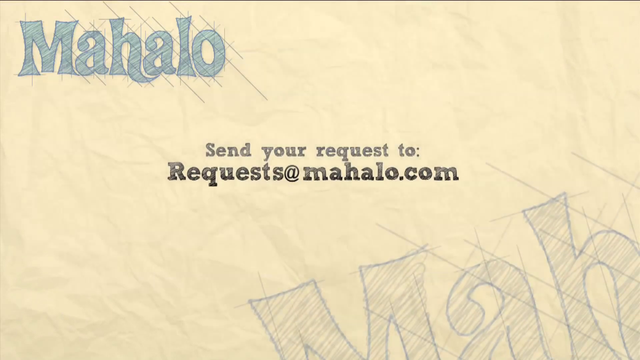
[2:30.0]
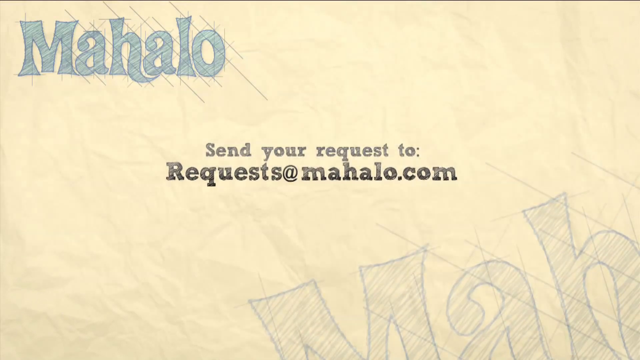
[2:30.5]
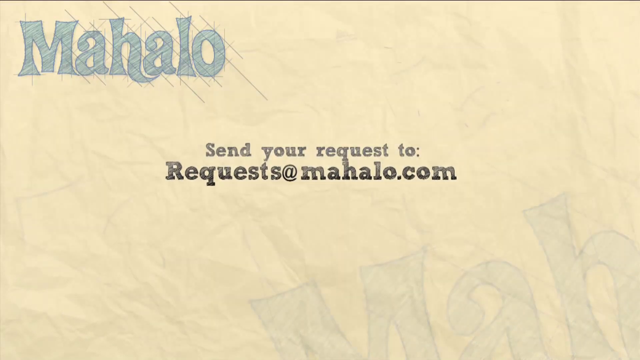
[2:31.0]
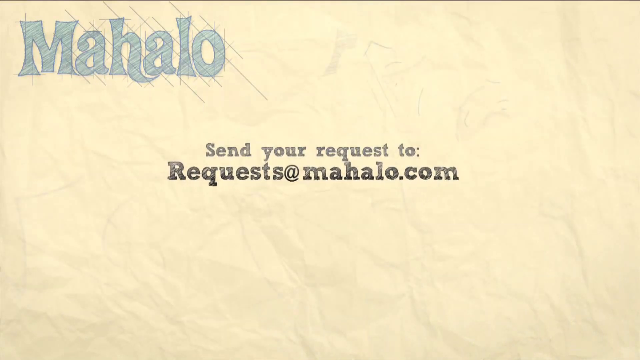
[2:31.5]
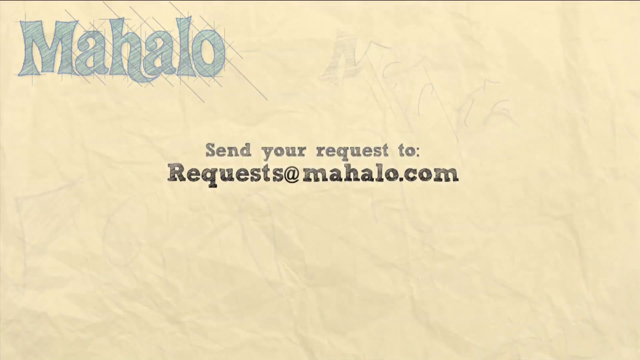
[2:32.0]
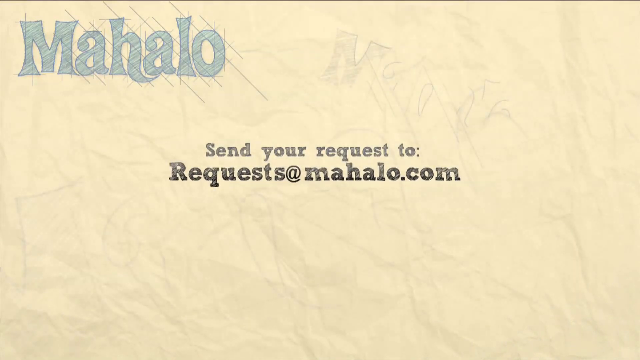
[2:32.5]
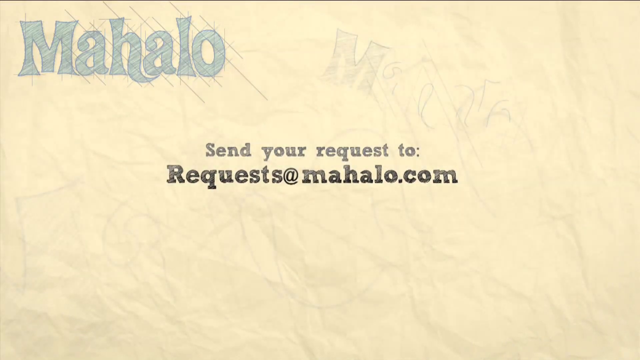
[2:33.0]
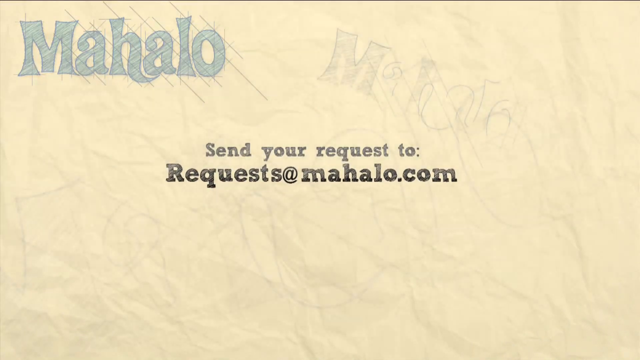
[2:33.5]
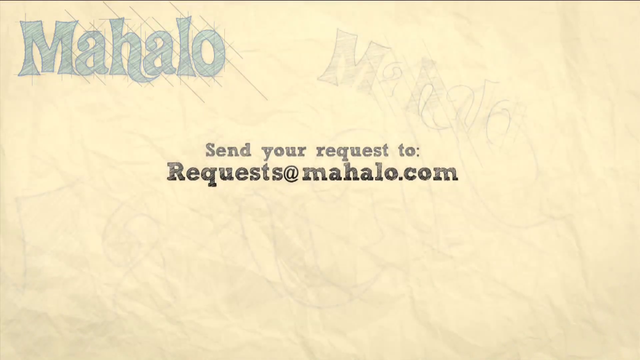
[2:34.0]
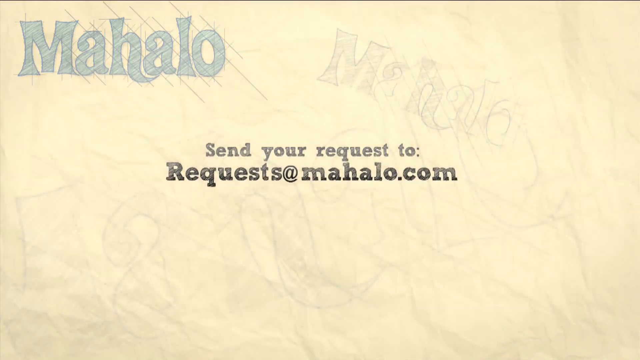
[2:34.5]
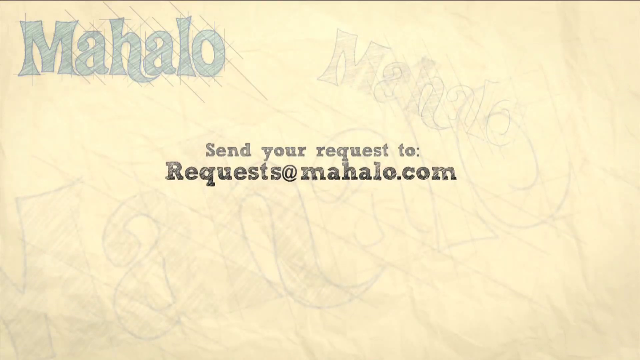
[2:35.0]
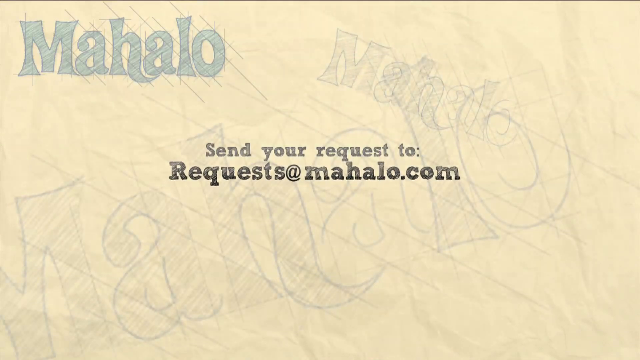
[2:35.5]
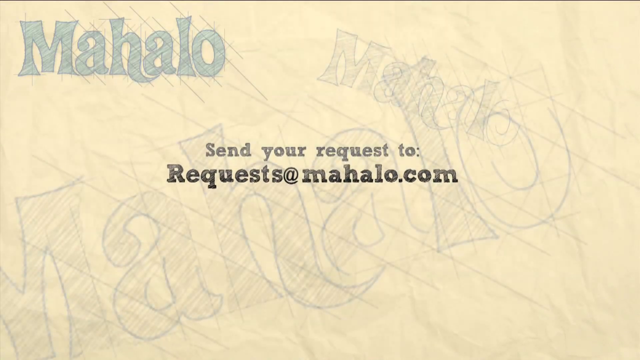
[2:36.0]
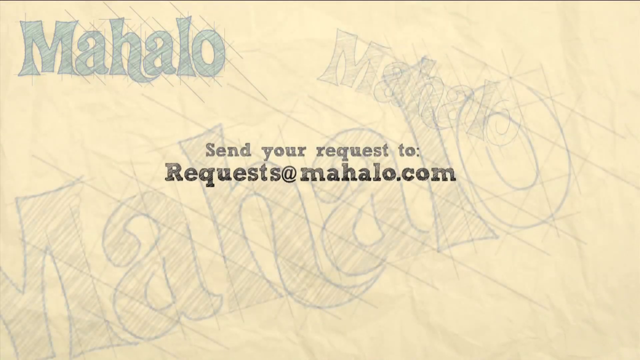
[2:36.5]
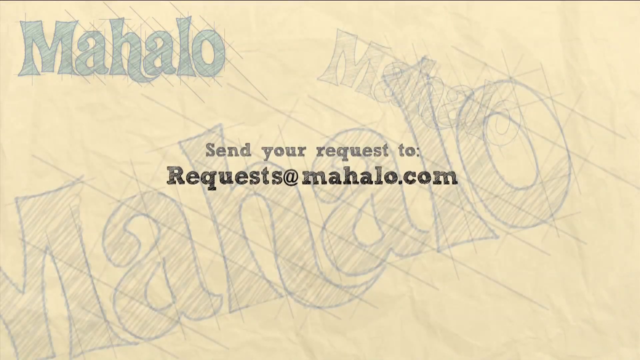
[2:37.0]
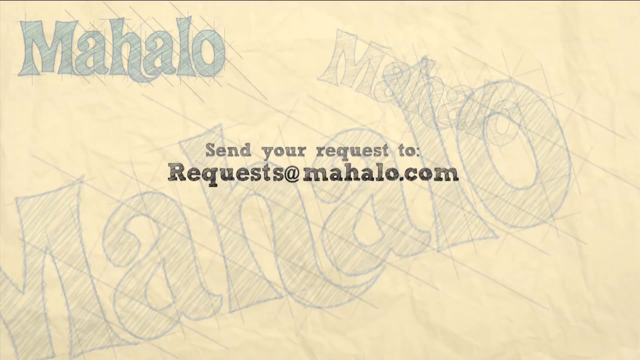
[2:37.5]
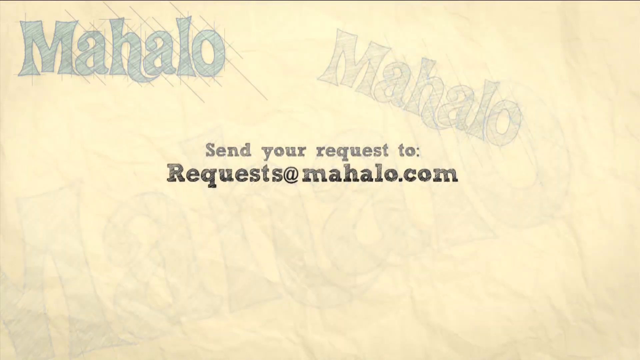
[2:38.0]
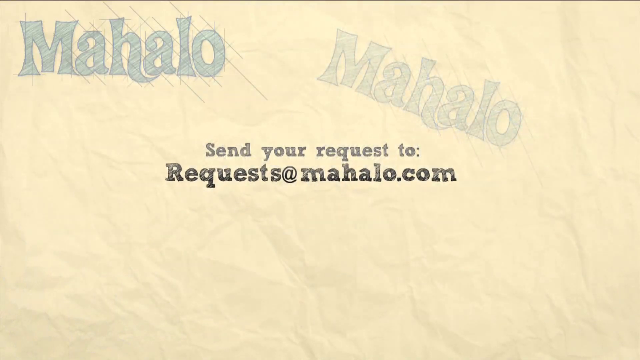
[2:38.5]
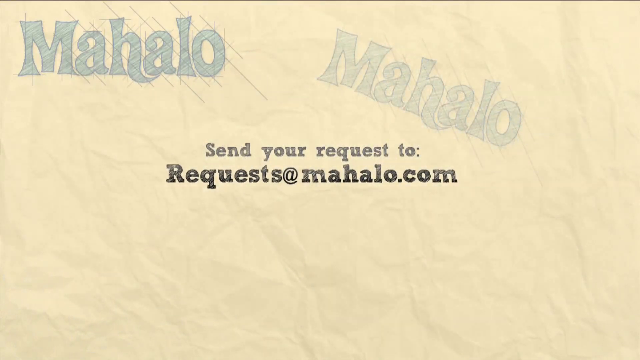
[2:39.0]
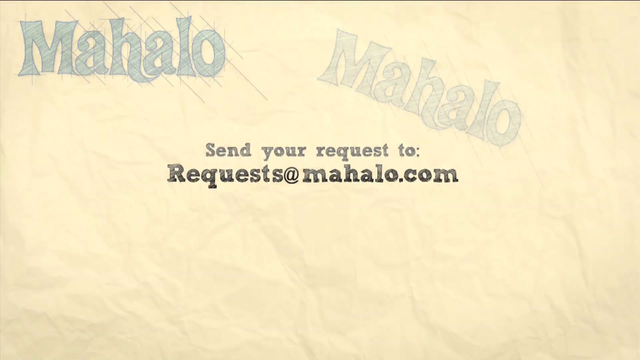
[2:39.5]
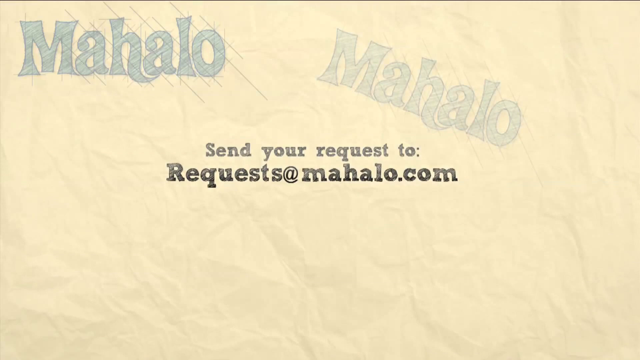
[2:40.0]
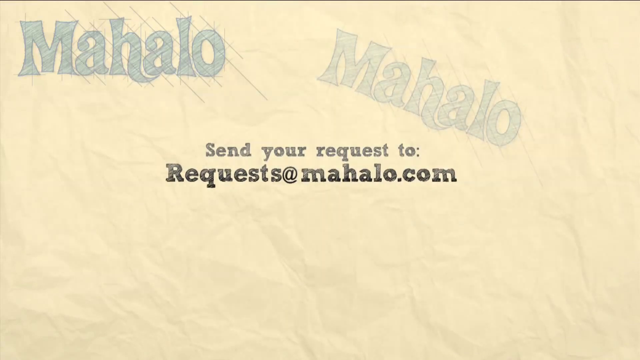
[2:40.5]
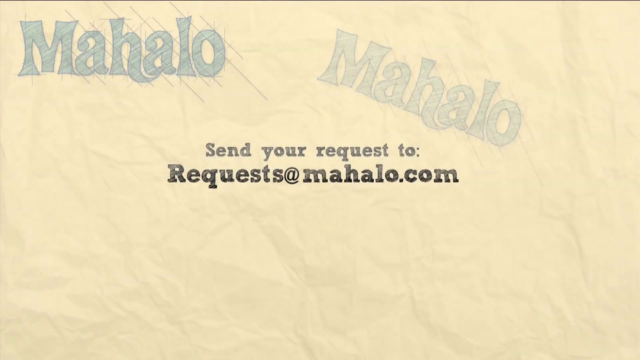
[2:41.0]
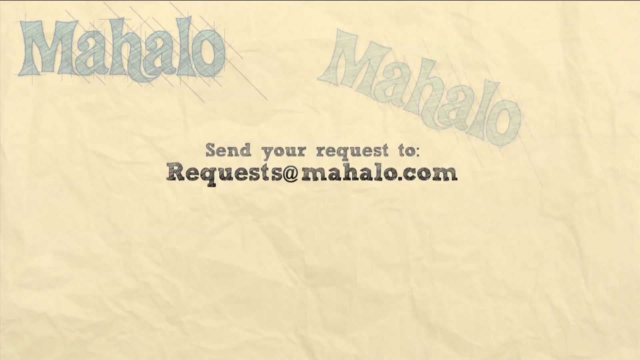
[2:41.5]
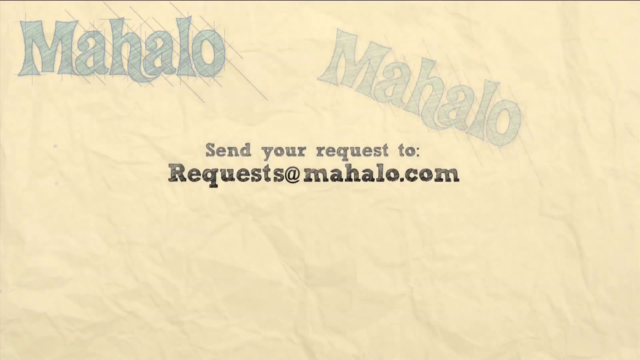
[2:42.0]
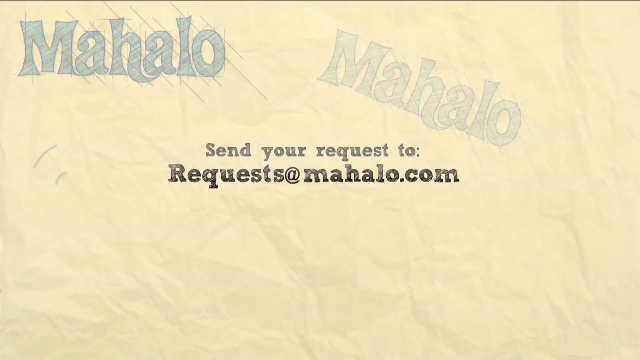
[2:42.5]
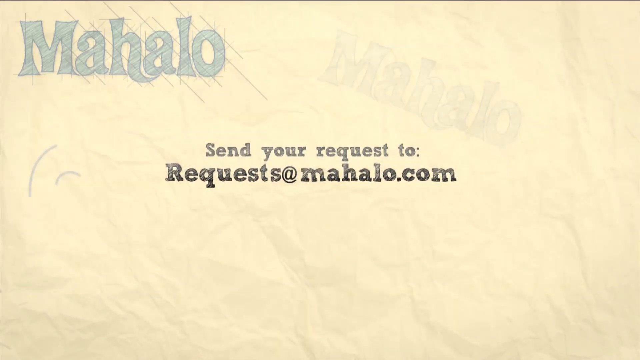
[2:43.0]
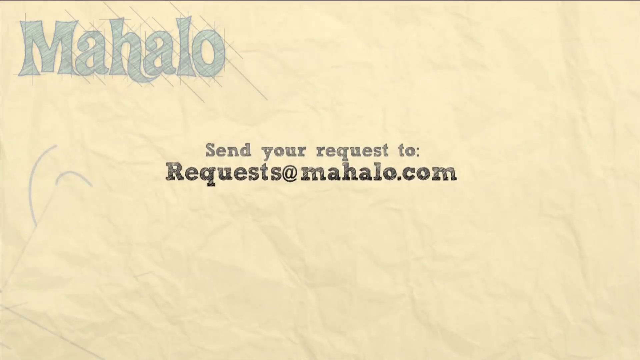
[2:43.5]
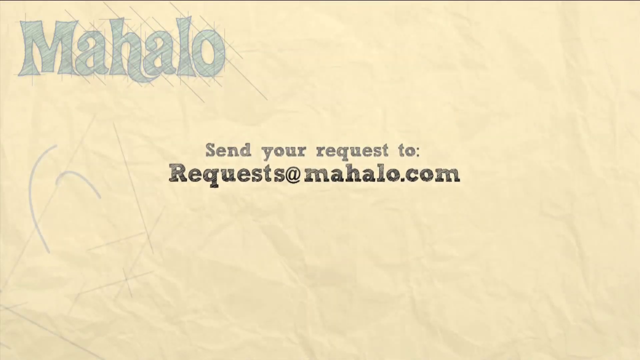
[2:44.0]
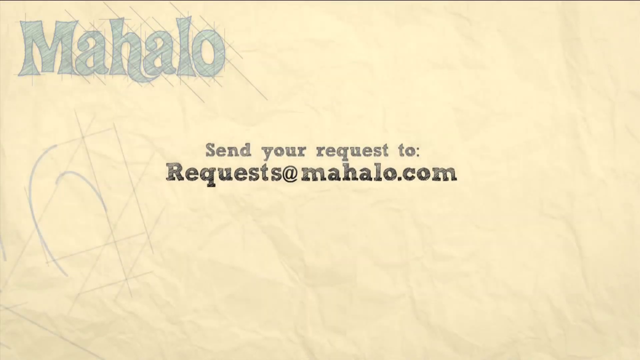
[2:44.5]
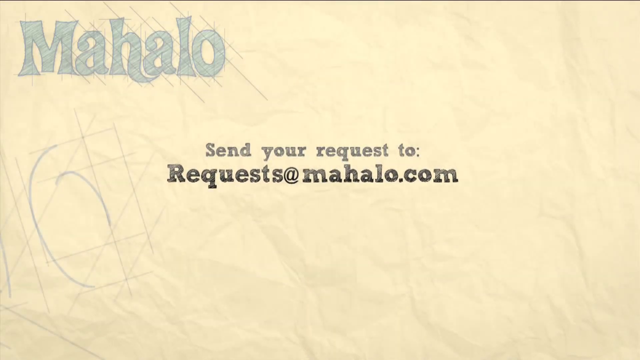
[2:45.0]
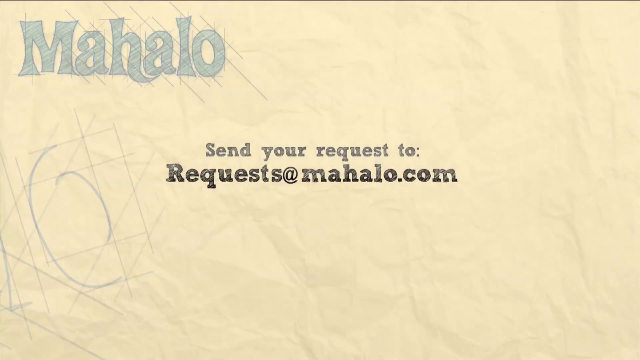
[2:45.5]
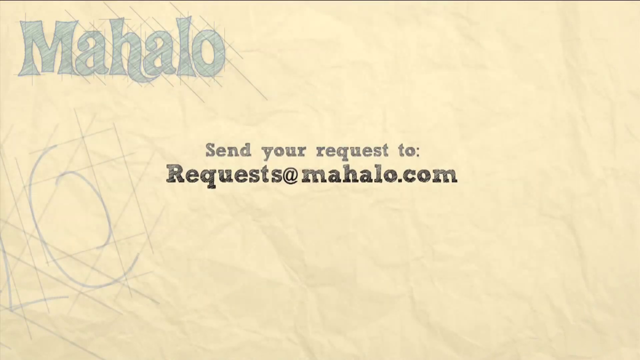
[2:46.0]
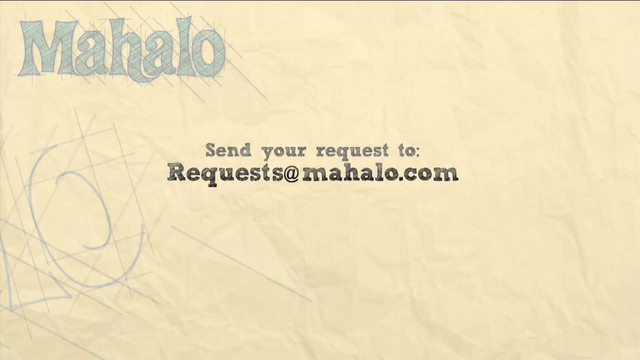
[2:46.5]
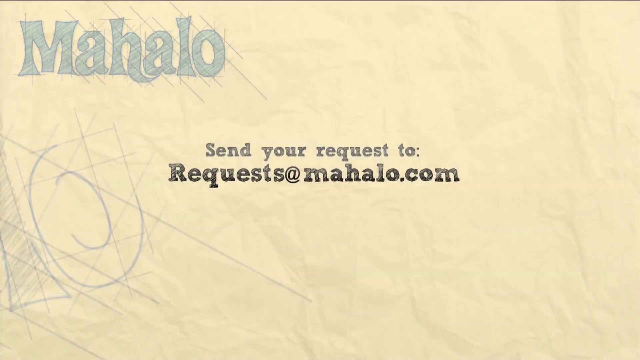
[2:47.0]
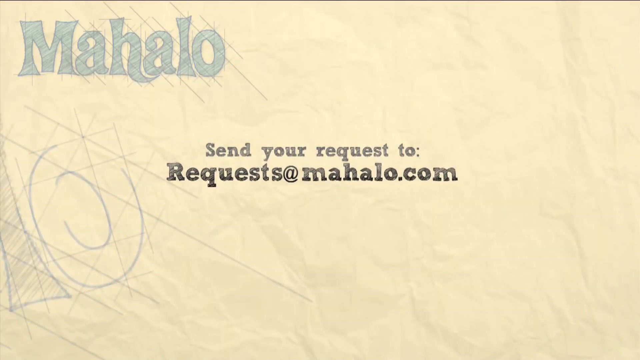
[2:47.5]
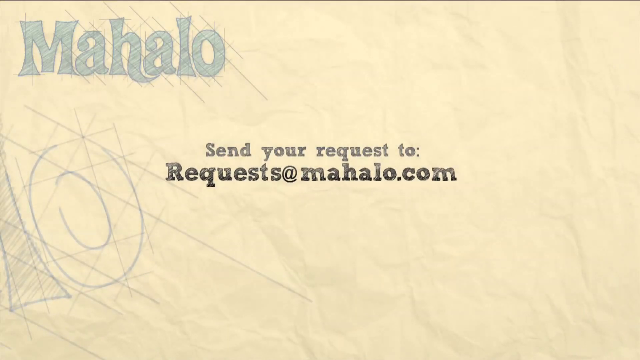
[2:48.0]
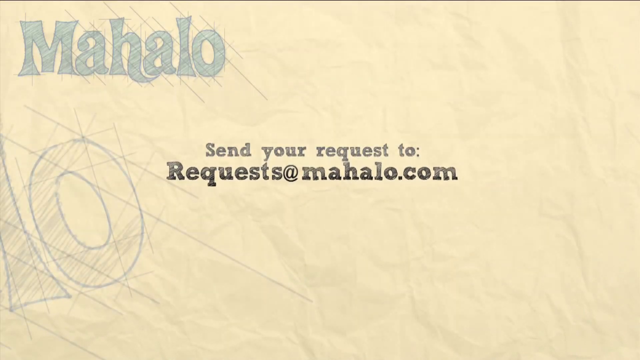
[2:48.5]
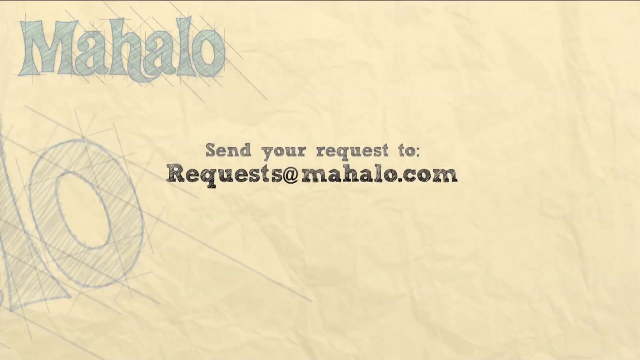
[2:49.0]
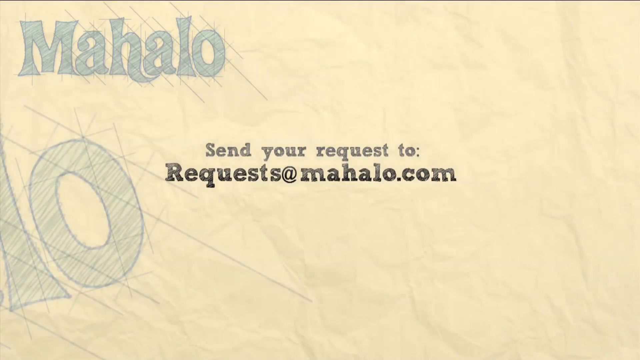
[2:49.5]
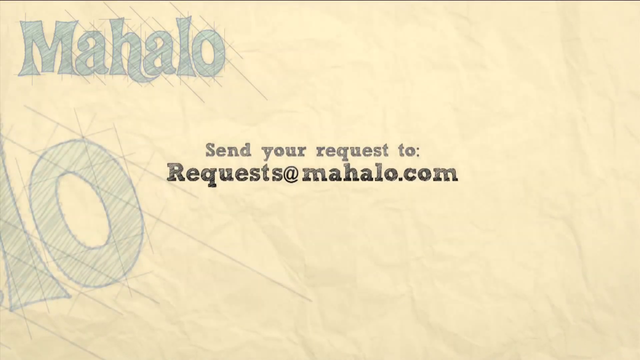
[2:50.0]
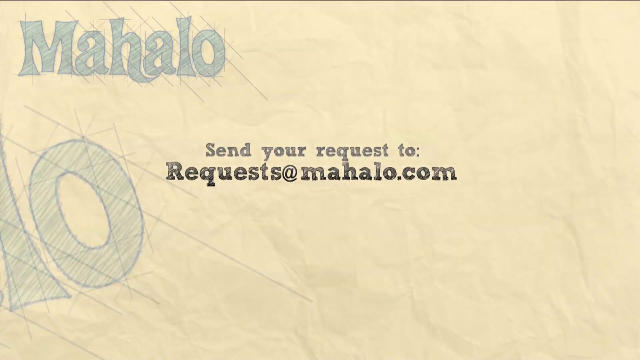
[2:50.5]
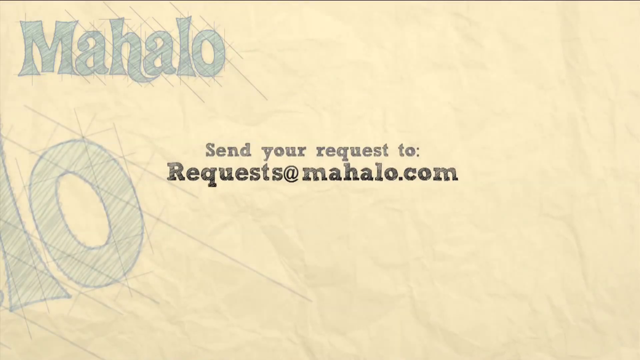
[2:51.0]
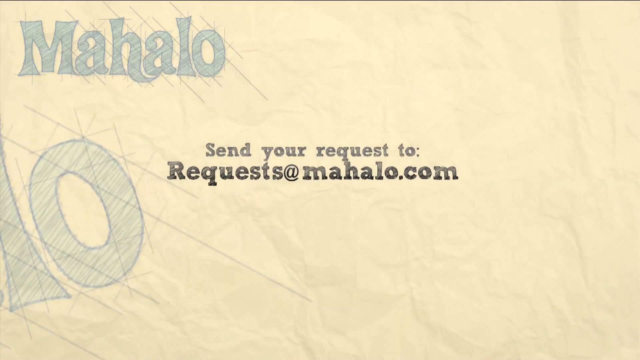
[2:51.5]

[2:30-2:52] The outro is drawn in pencil on light pink paper. At the top left, "Mahalo" is written in blue with a pencil effect. In the center is an email message reading "send your request to request at Mahalo.com", for requesting a video. The email text is animated, moving up, down, left and right. A "Mahalo" watermark at the top right of the email address appears and disappears, and geometric lines appear out of the Mahalo word.